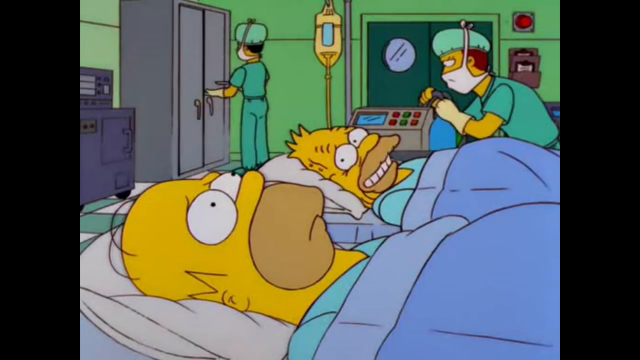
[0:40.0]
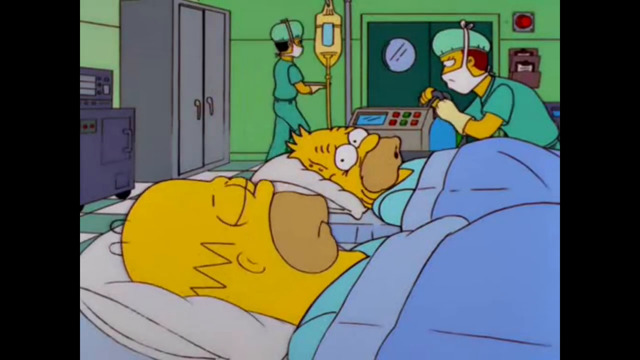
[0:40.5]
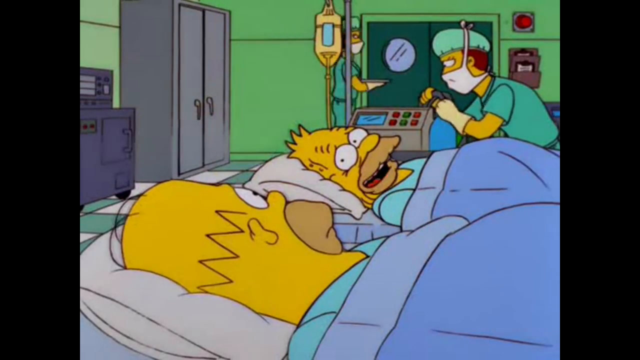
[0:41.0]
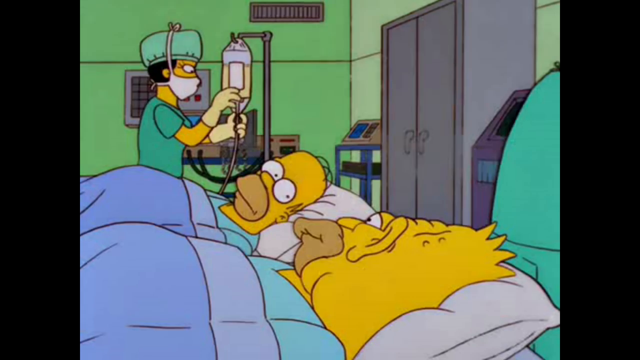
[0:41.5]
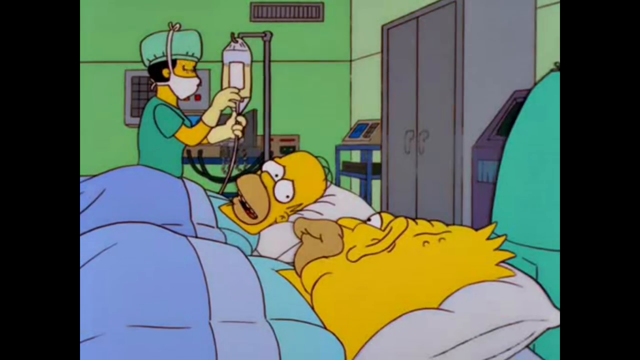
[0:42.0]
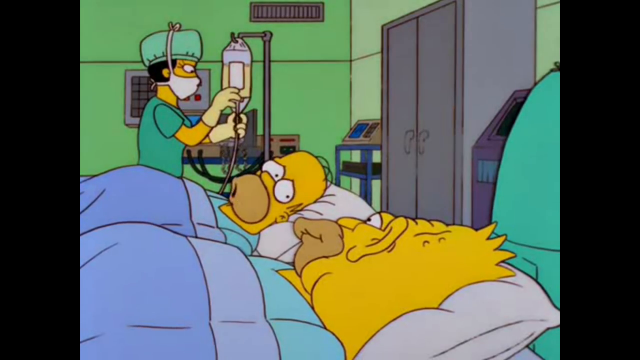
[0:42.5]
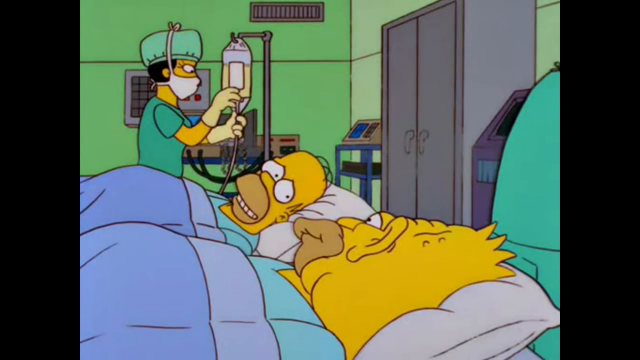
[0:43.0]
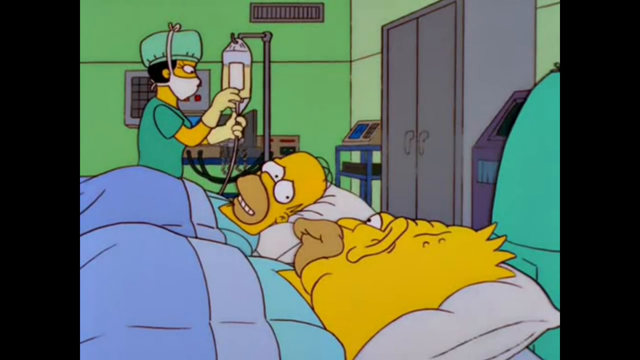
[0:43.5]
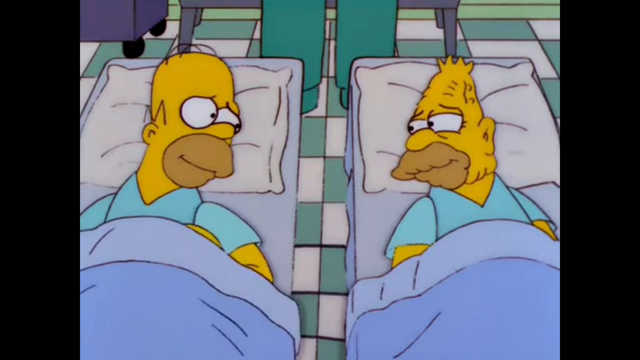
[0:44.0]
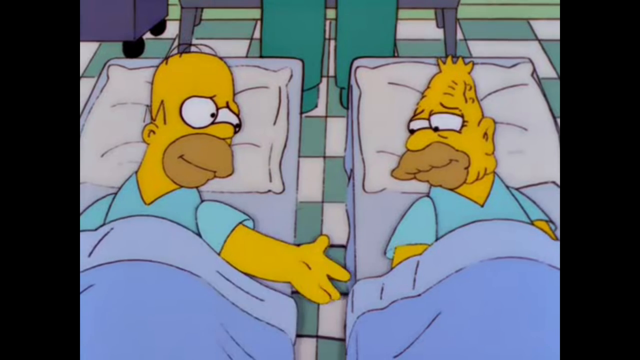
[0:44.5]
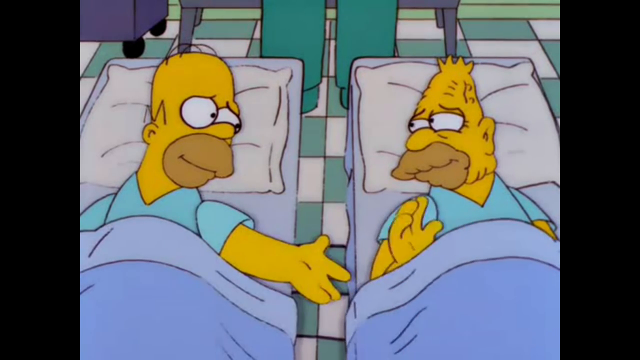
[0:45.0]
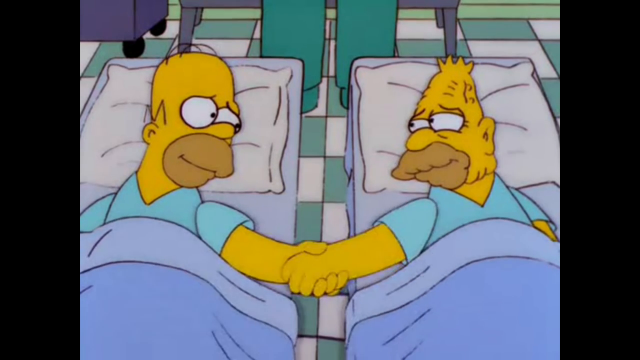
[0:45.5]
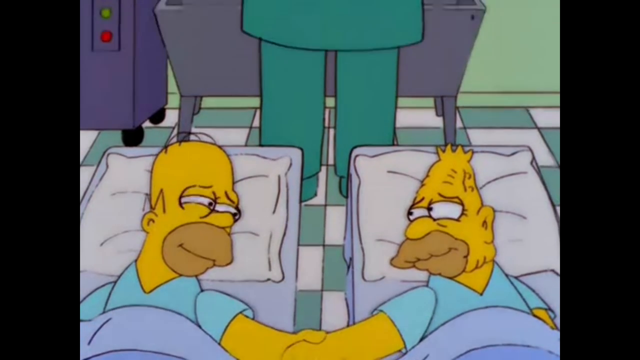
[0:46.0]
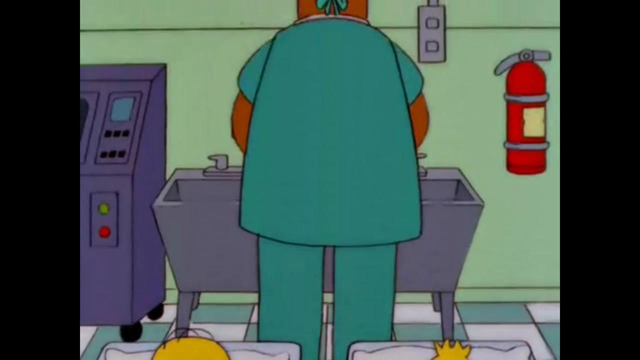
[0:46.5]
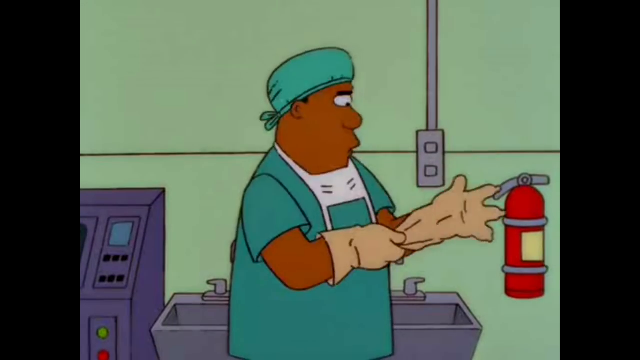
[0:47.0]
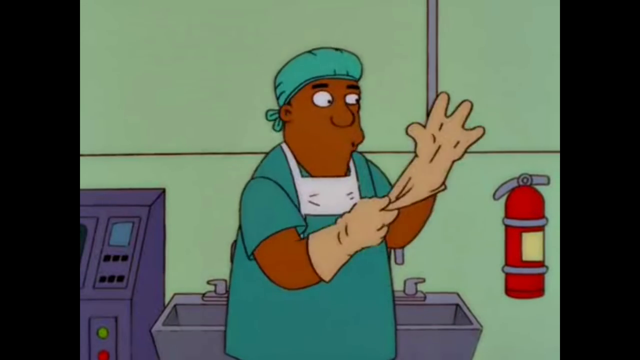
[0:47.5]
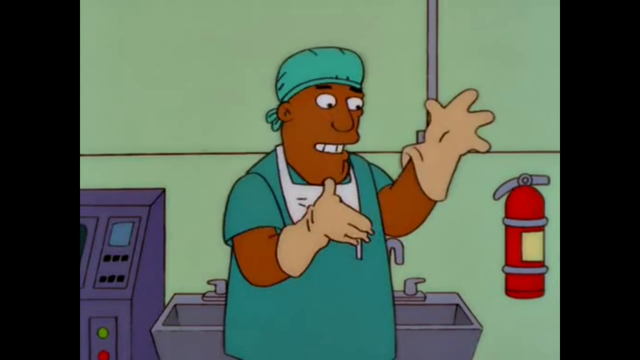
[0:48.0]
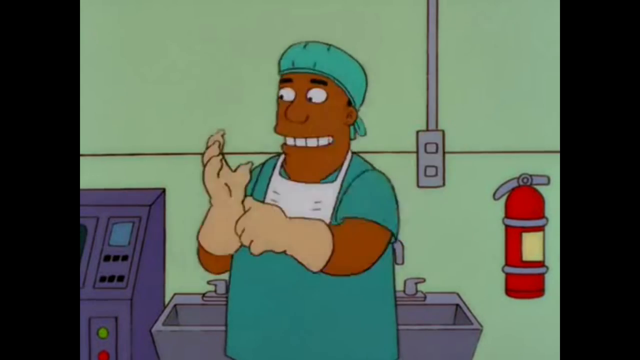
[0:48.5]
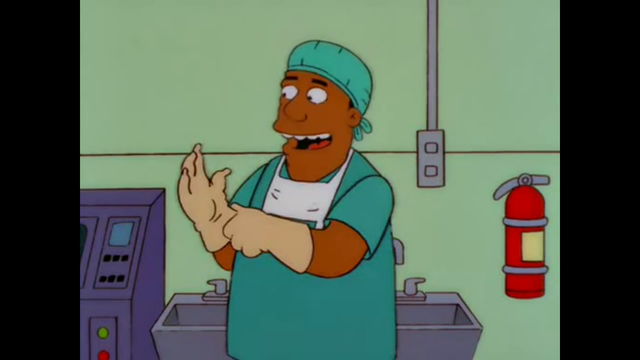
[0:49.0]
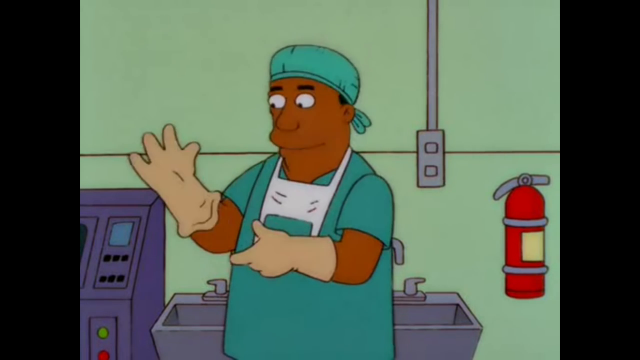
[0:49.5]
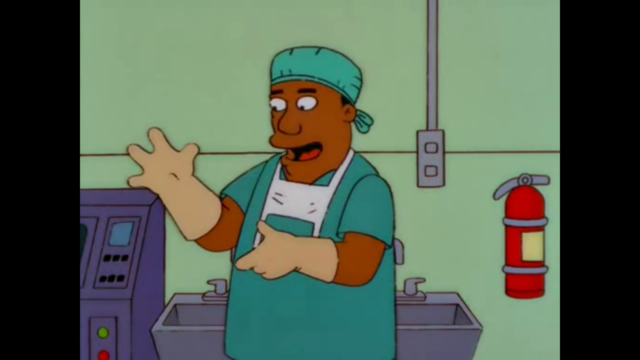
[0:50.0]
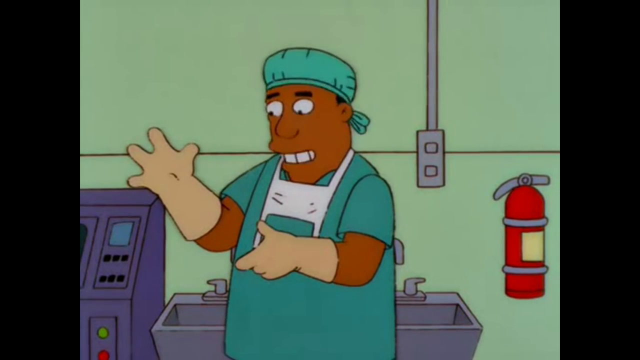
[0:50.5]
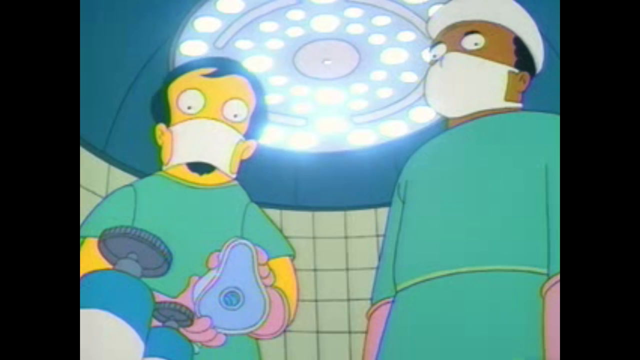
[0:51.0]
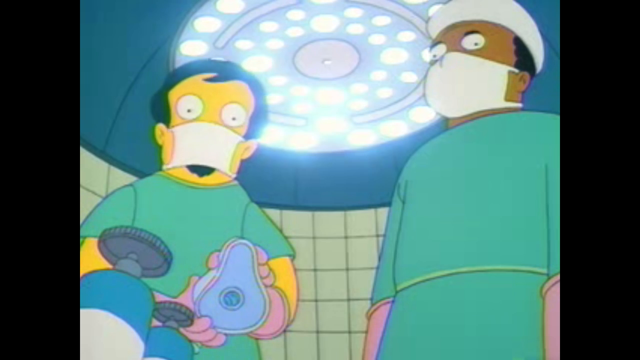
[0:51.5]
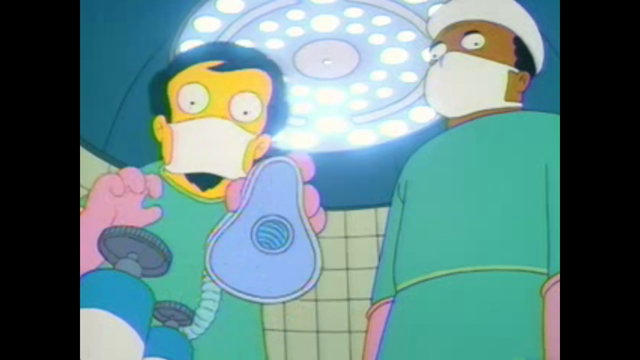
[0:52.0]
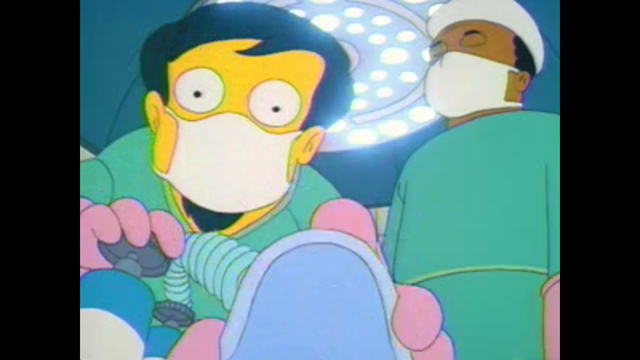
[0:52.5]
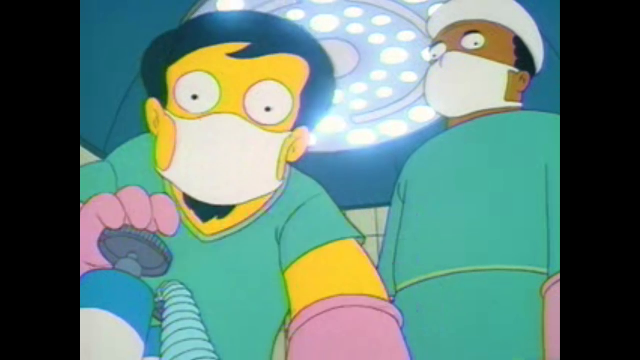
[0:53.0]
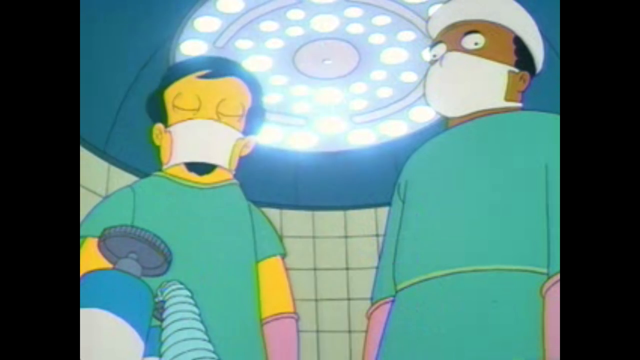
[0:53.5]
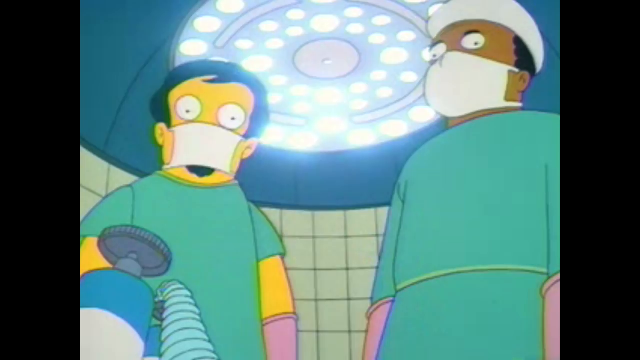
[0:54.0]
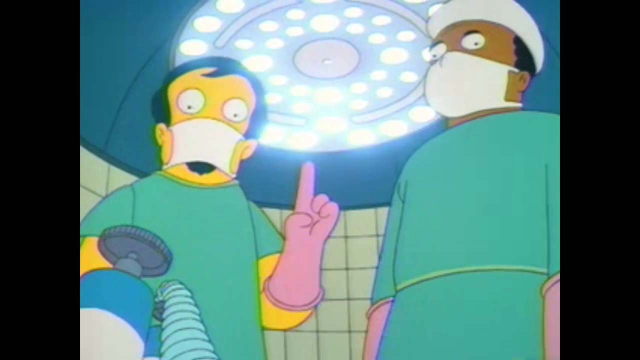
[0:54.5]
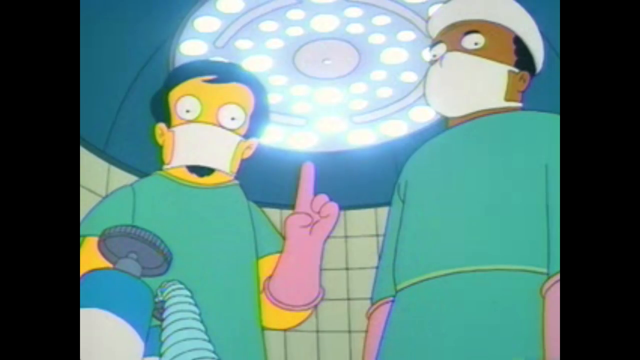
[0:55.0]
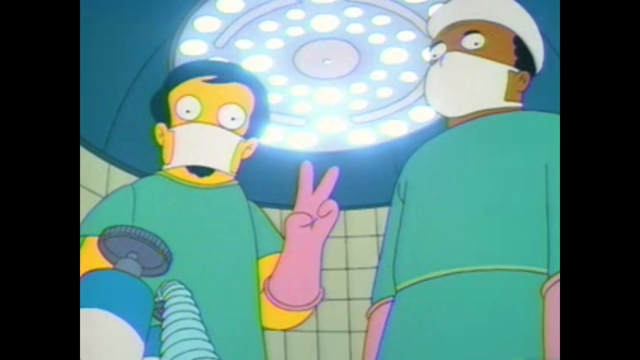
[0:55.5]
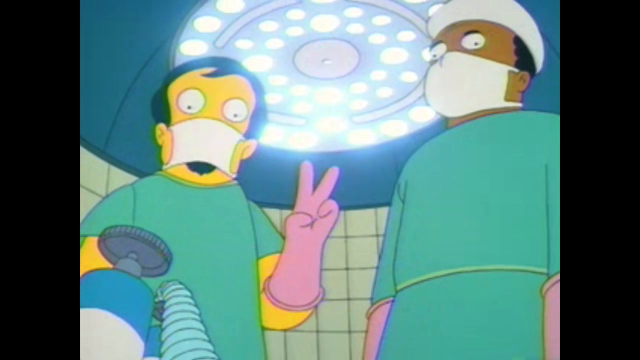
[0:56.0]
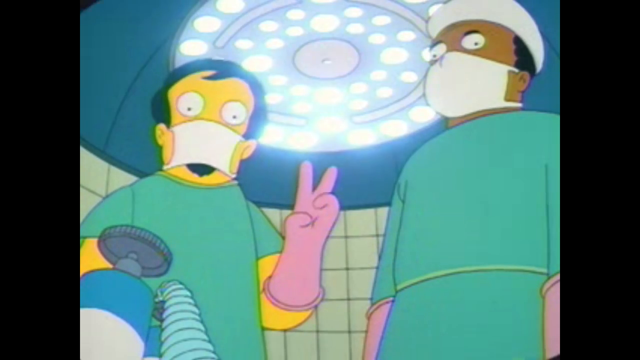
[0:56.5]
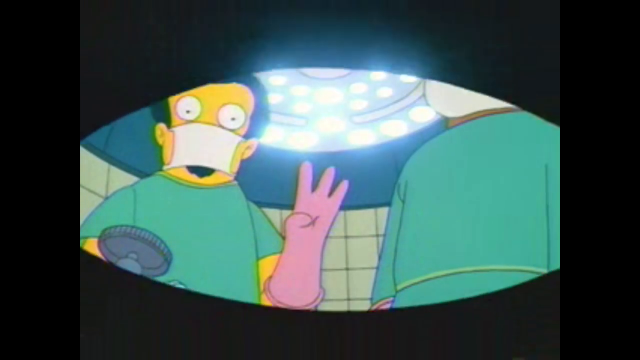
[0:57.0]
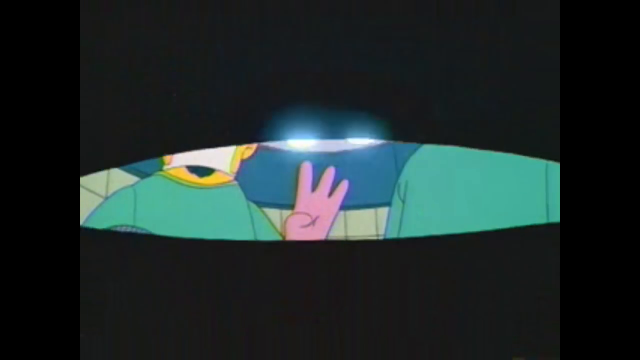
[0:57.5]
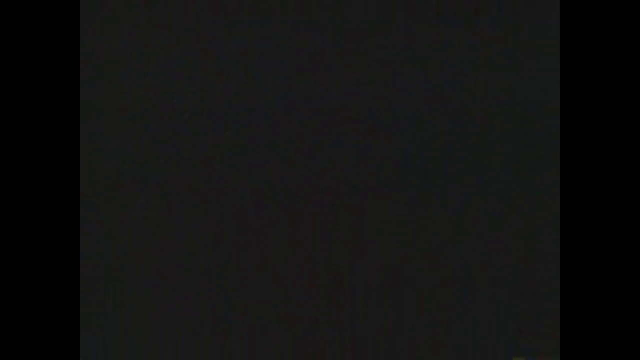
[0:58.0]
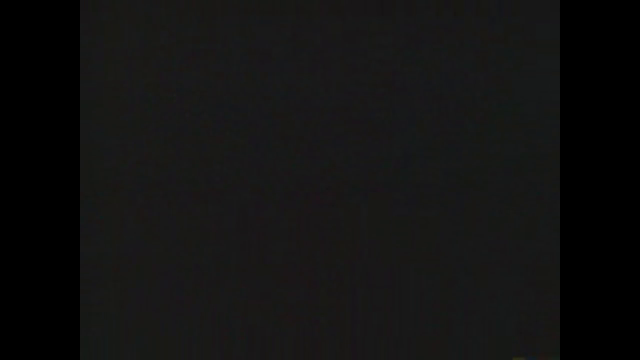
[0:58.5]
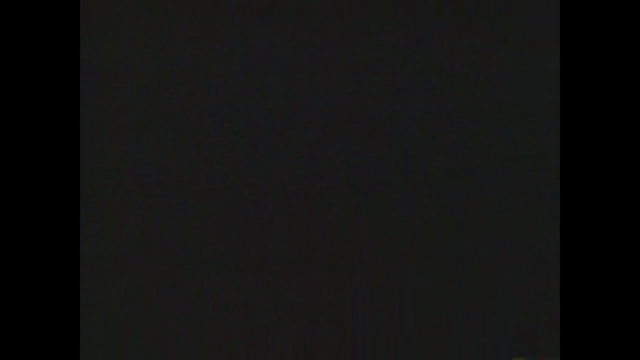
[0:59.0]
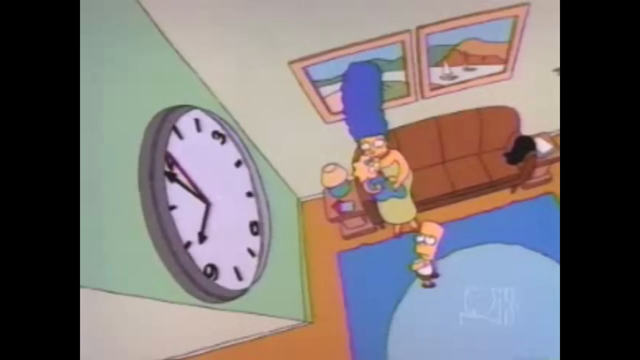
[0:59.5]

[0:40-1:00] Homer Simpson lies in the bed closest to the screen, and a little further in, Homer's father lies in the bed beside him, looking at him with a worried smile, while Homer lies looking up at the ceiling in deep thought. They are in a hospital. A nurse hooks up a machine beside the father, and another nurse looks in a cabinet for medical devices. On the far wall, an orange blood bag hangs on a post; it has no blood in it yet and looks orange and empty. Homer's father talks nervously, and Homer looks over to comfort him and holds out a hand. The doctor turns and cleans up his hands, then turns around wearing what look like kitchen gloves, and calls in the anesthesiologist to knock Homer and his father unconscious for the procedure.